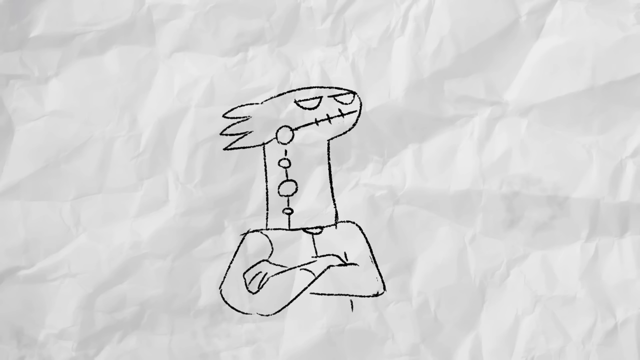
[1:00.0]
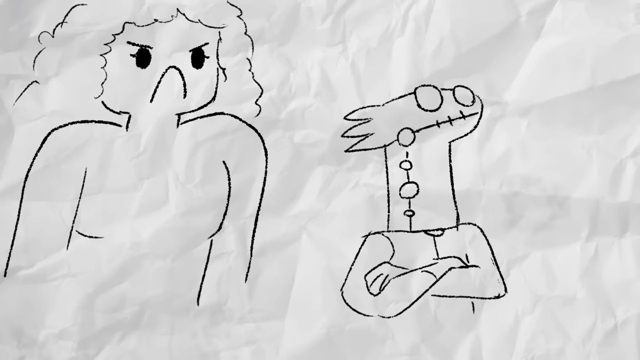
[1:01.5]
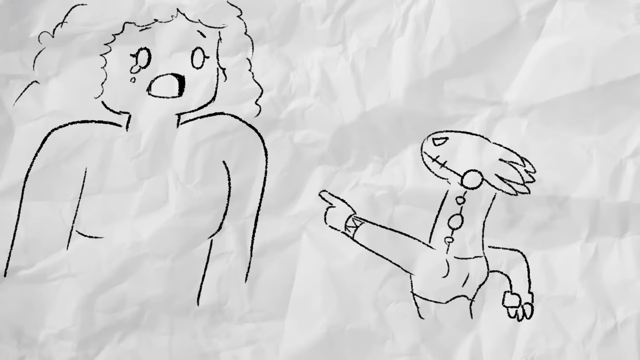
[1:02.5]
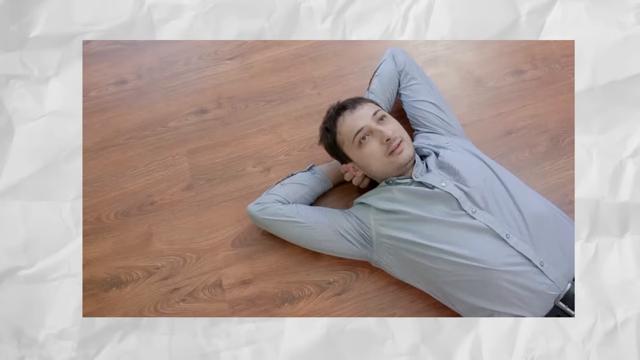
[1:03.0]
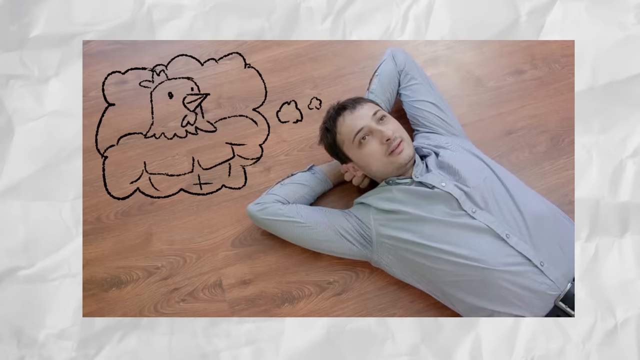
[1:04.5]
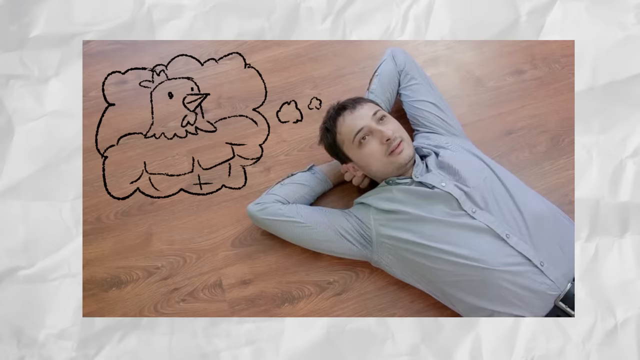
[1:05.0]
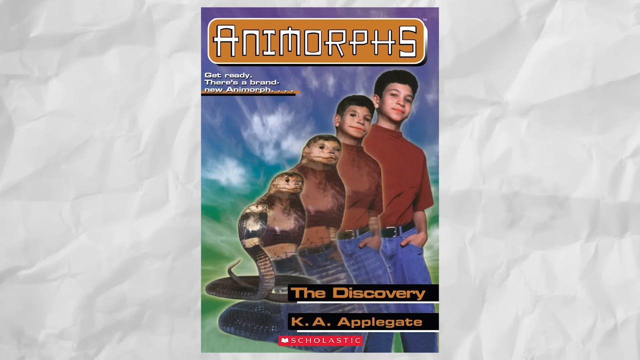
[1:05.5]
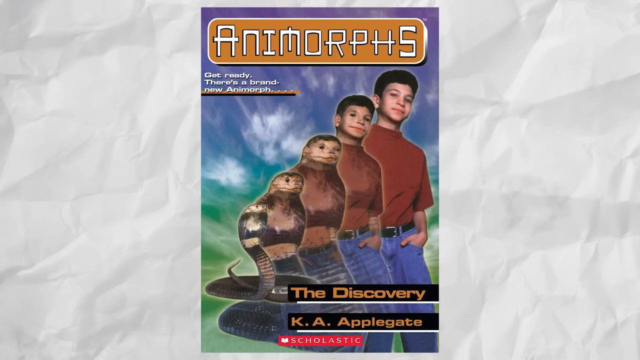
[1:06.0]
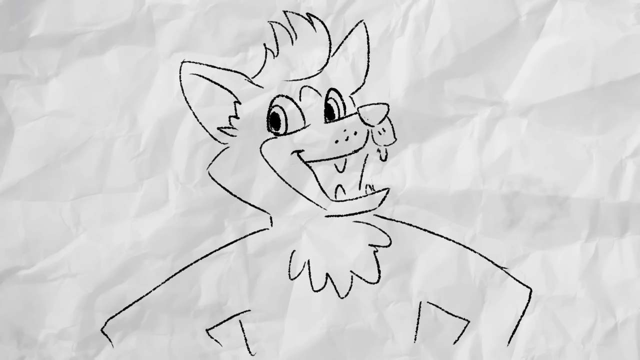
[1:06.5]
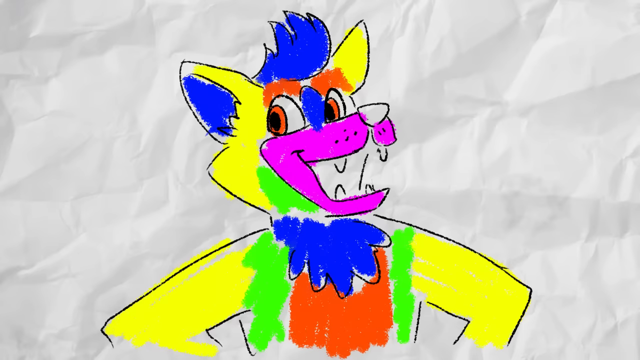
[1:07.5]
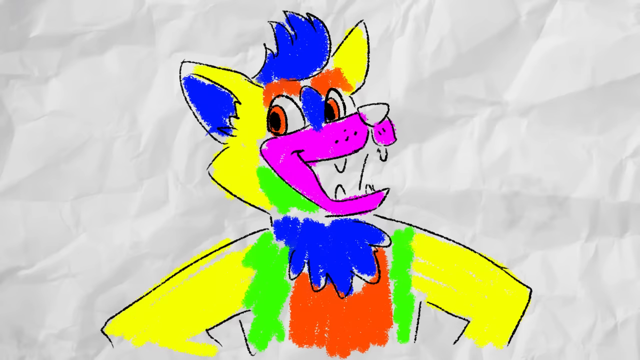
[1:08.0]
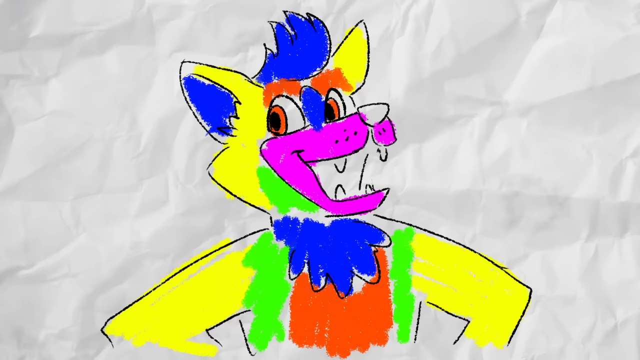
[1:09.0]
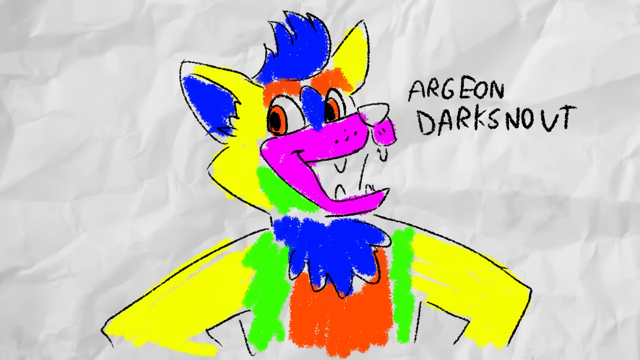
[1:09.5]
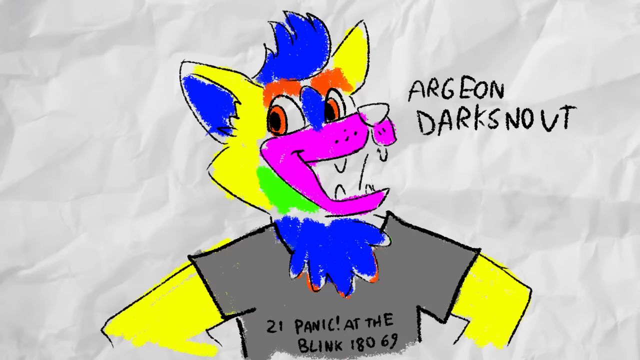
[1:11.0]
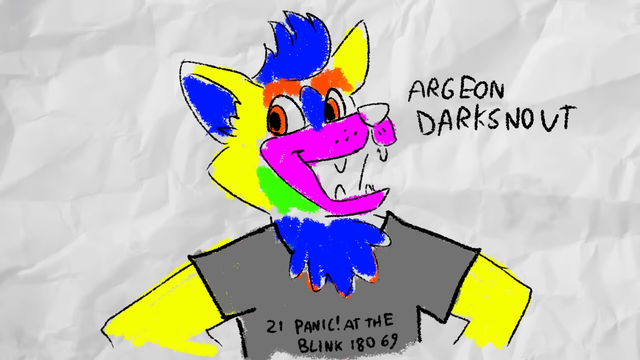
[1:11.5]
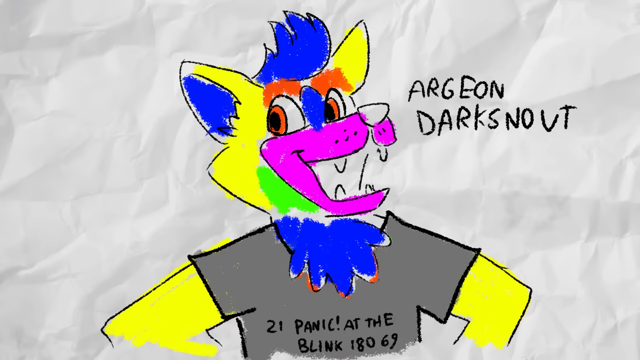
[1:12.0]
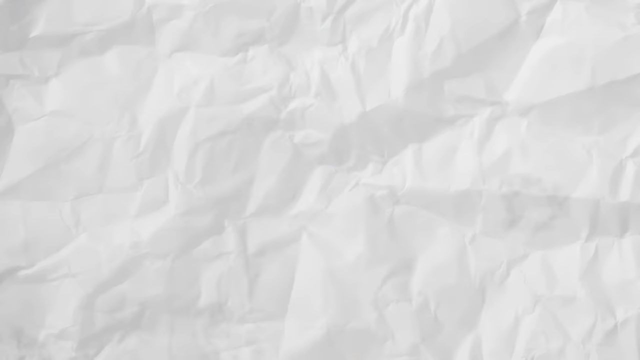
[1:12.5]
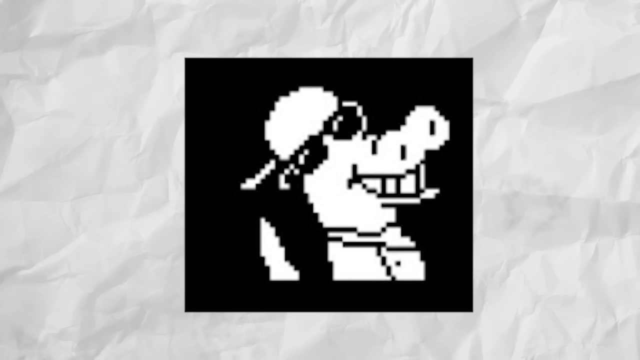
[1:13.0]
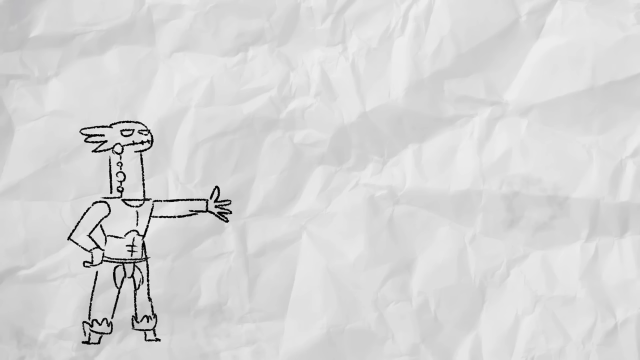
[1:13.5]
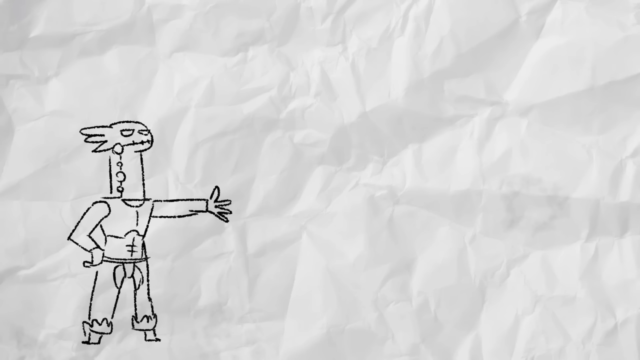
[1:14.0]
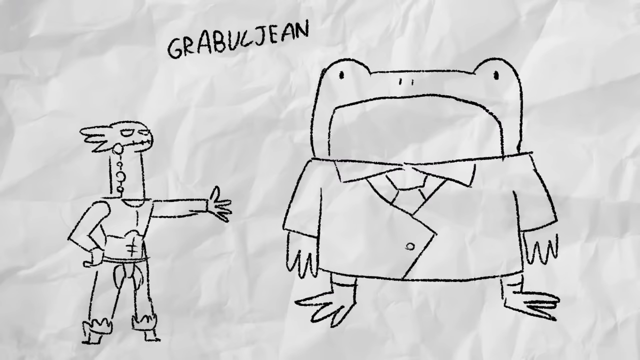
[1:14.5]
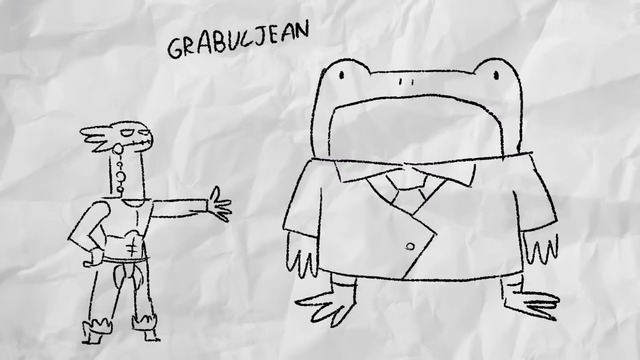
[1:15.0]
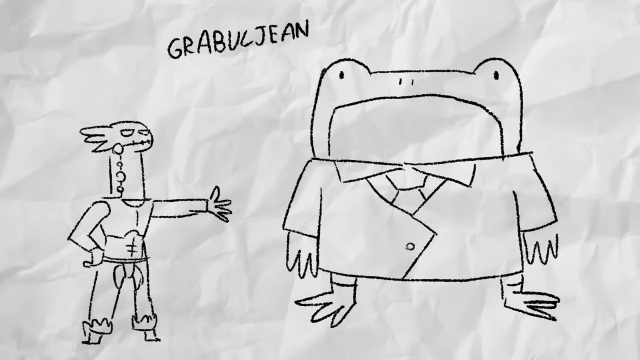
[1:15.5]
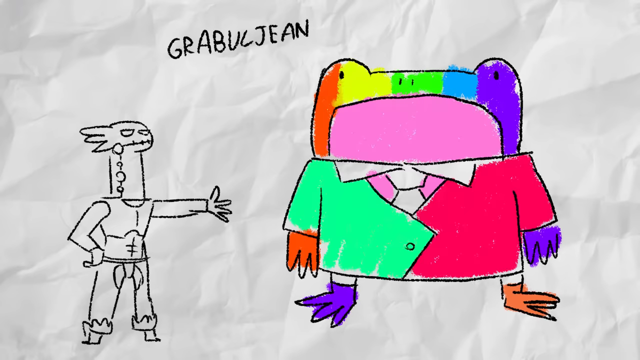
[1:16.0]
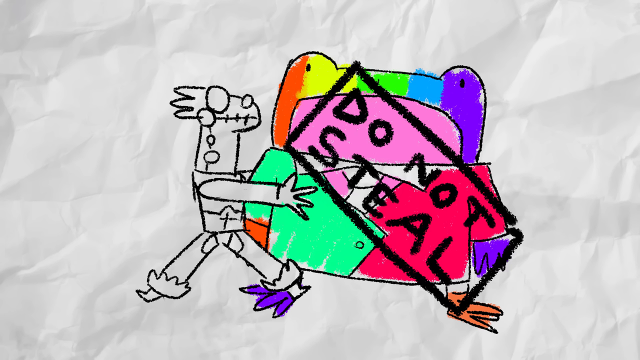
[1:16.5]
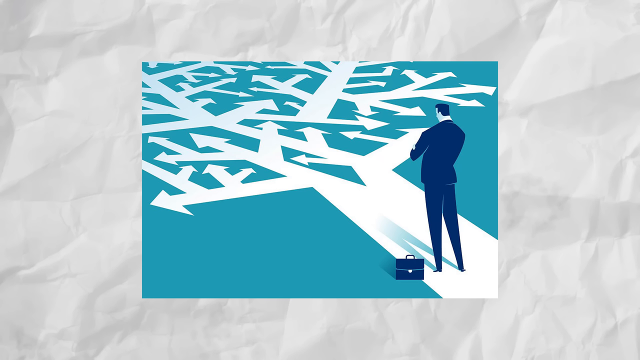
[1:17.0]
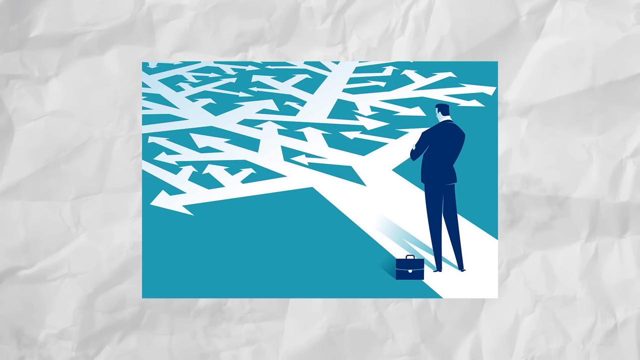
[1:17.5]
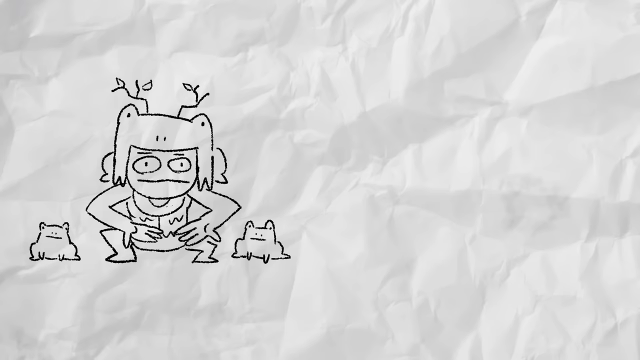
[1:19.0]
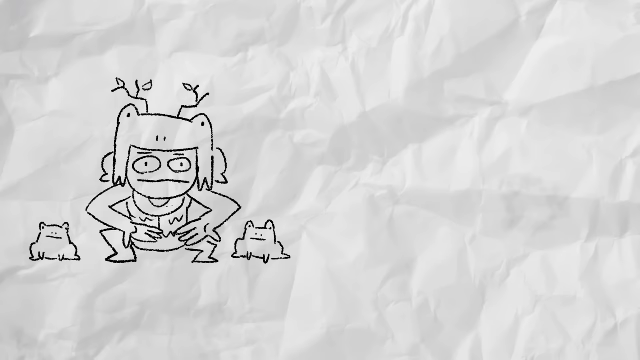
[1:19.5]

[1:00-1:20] A series of random images follows, some of which appear to be pencil drawings of characters from a game. One looks like it has a dragon head and human arms folded in front of it. A large female character appears behind it, frowning, and then he turns to face her as she cries. There is a character that looks like a fox and another that looks like a giant frog. Some of the black and white pencil drawings appear to be colored, as multiple patches of various colors appear inside them. Intercut with these are random images: a photograph of a man lying on a floor on his back with his arms behind his head and his elbows up, staring up ahead of him, as a thought bubble appears above his head showing a sketch of a creature with a muscular human body and a rooster head; the cover of a book, Animorph 5, The Discovery by K.A. Applegate; and an illustrated image of a man standing on a path that looks like multiple arrows leading in different directions.